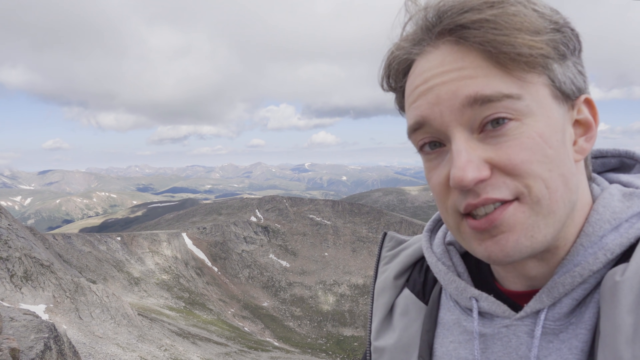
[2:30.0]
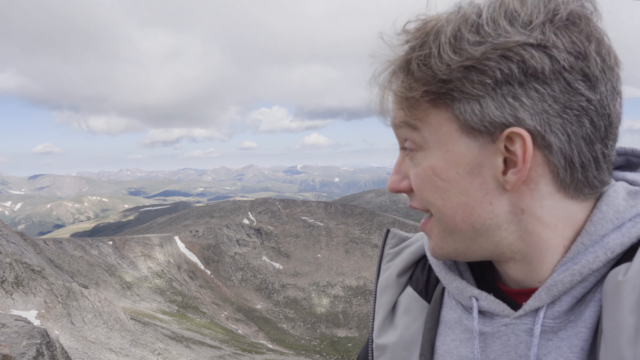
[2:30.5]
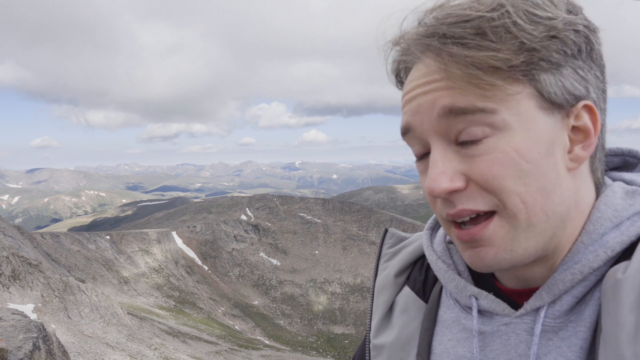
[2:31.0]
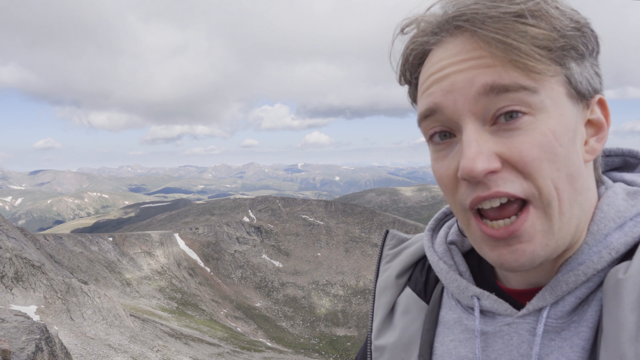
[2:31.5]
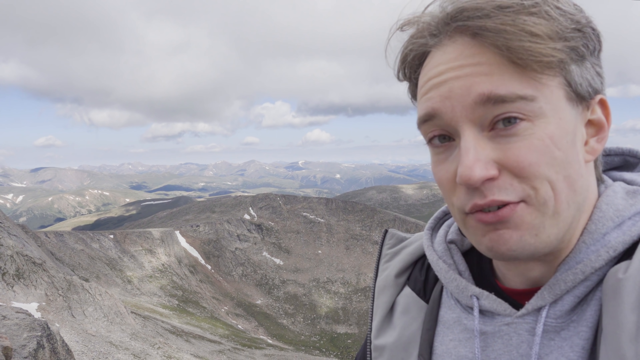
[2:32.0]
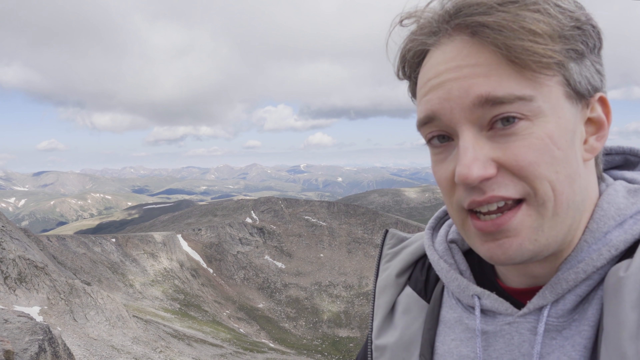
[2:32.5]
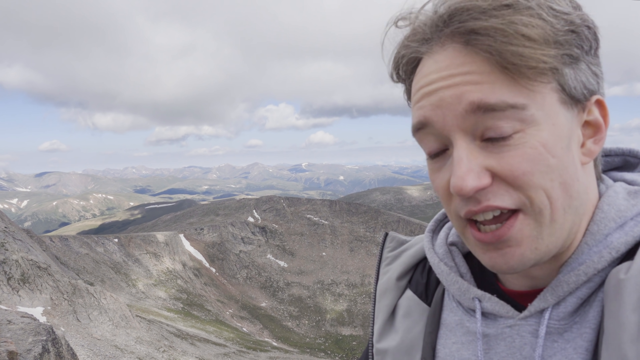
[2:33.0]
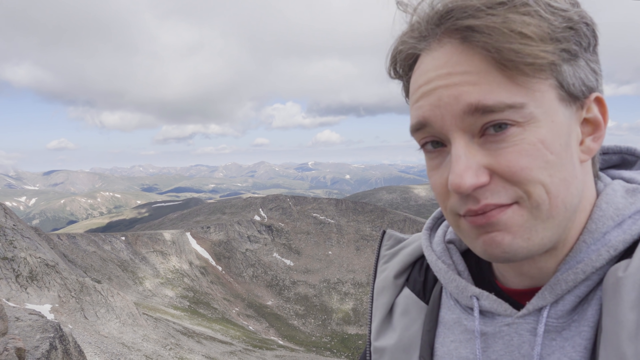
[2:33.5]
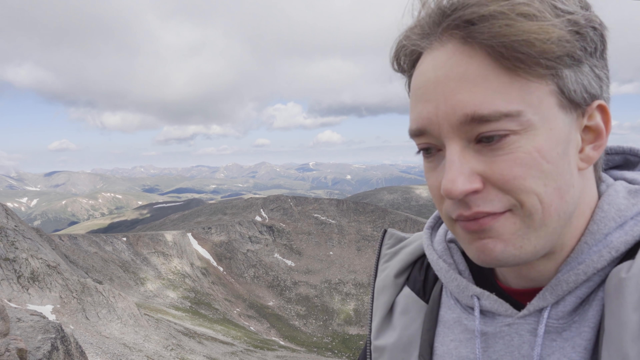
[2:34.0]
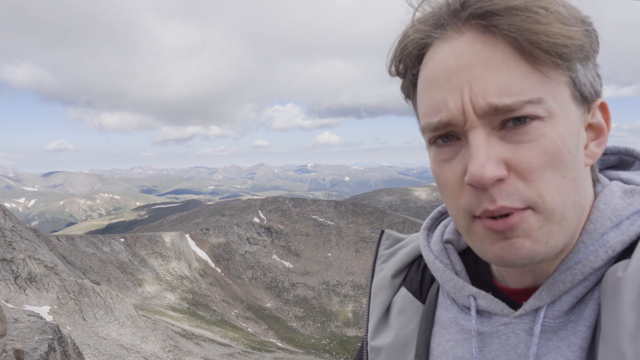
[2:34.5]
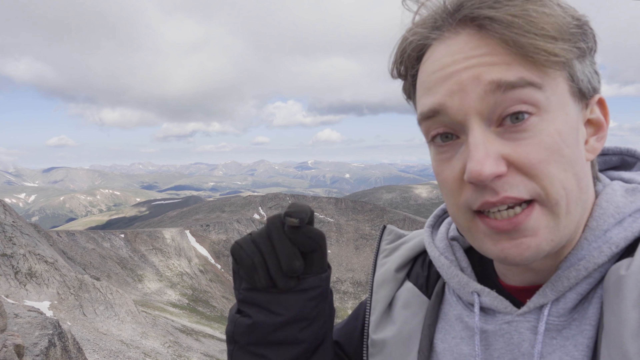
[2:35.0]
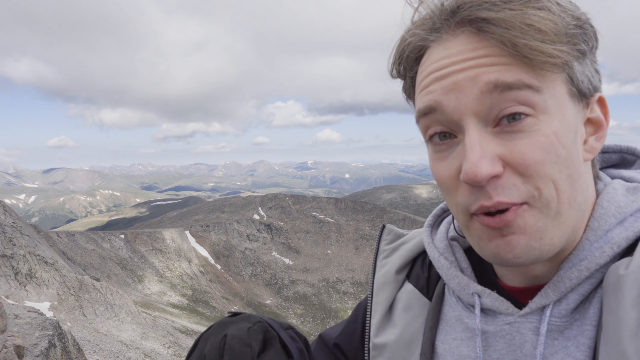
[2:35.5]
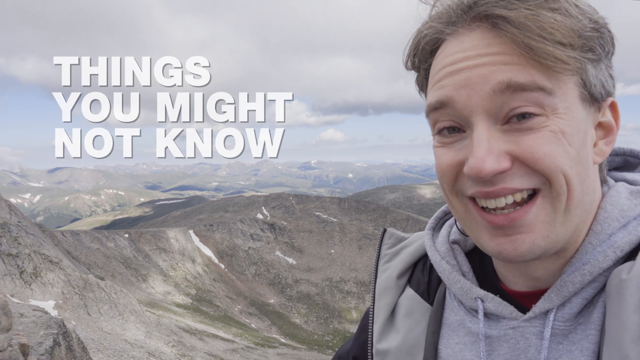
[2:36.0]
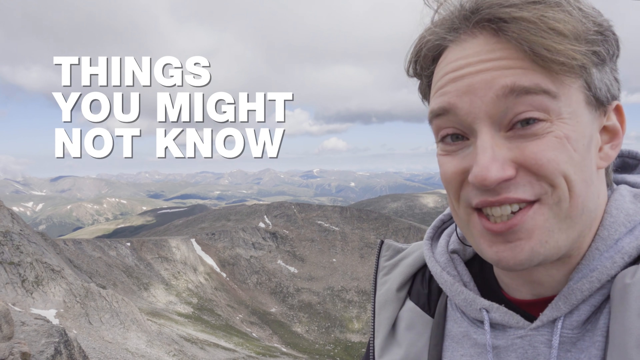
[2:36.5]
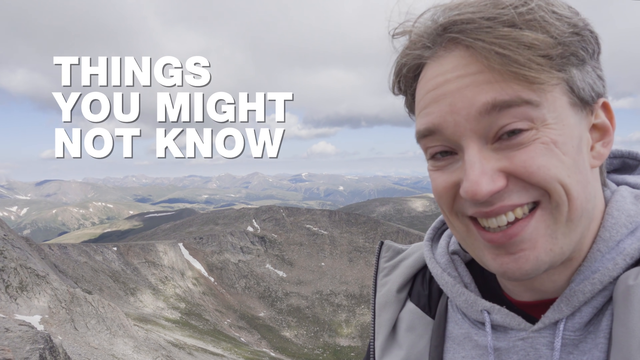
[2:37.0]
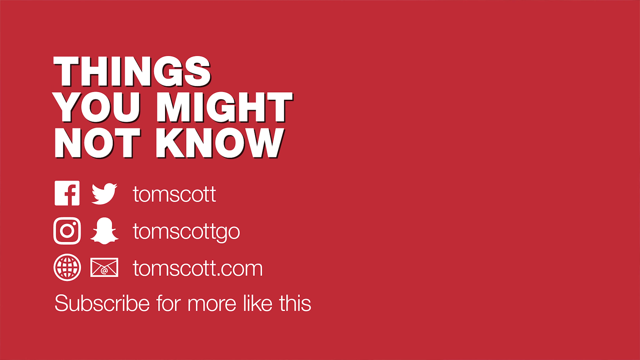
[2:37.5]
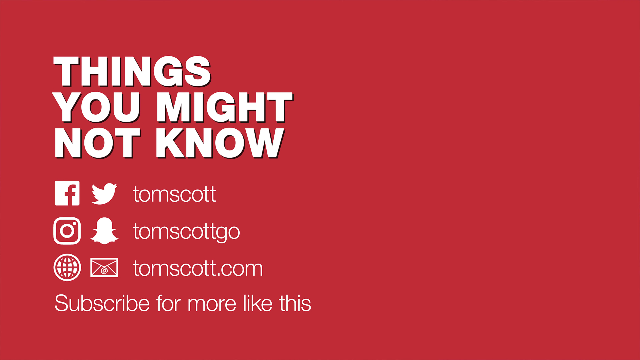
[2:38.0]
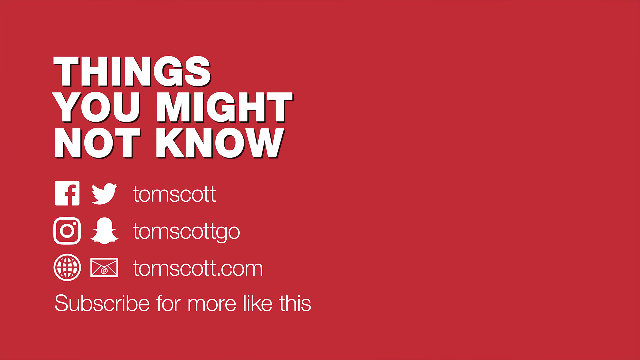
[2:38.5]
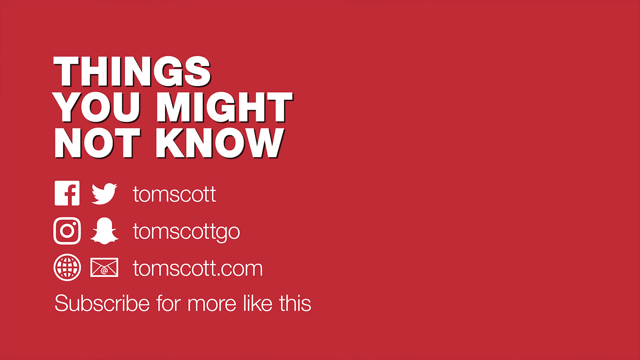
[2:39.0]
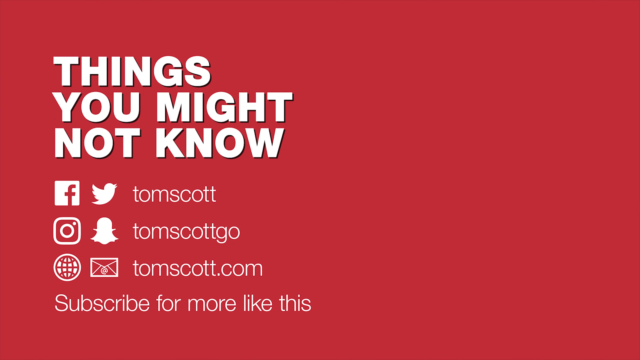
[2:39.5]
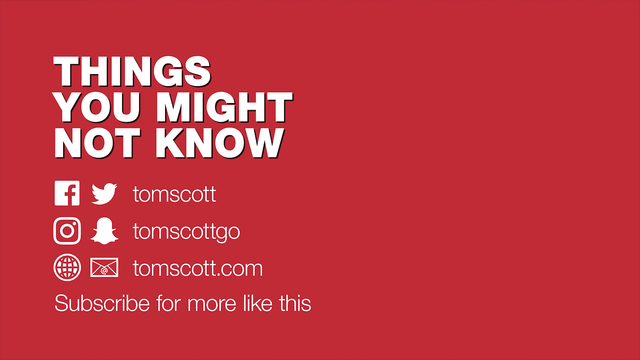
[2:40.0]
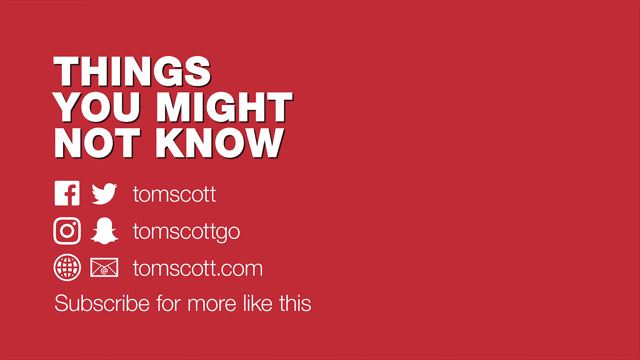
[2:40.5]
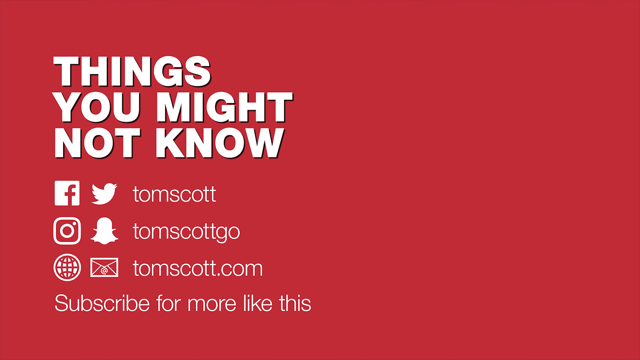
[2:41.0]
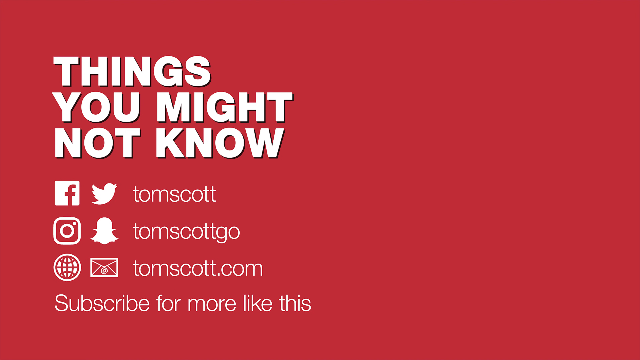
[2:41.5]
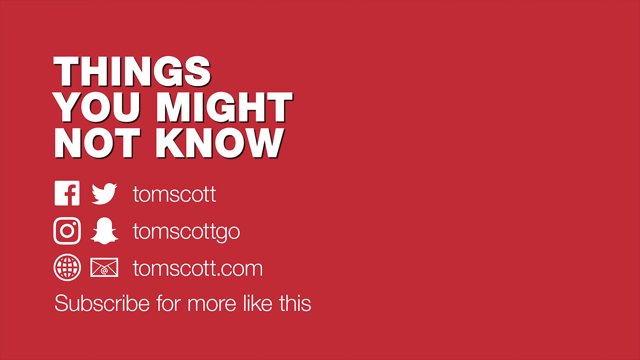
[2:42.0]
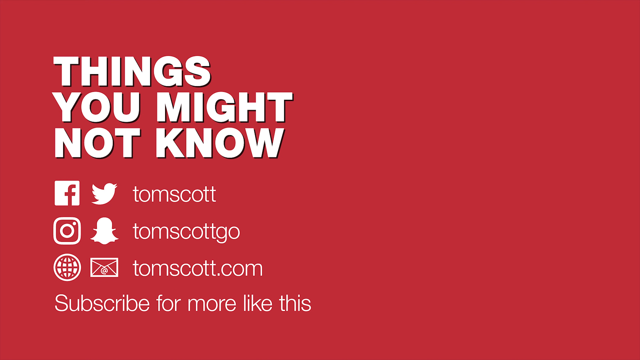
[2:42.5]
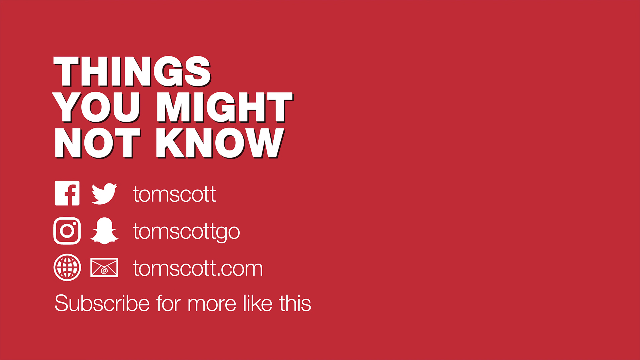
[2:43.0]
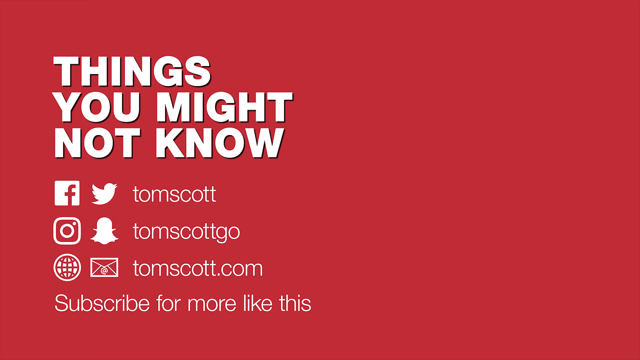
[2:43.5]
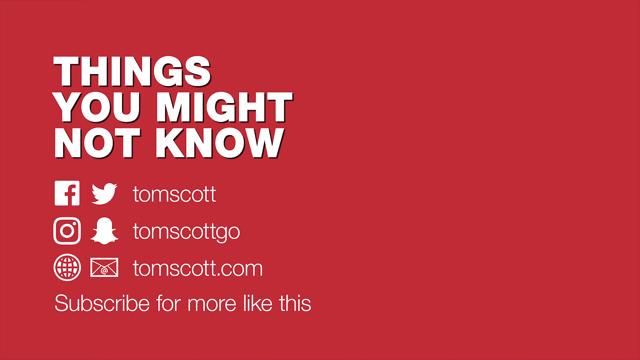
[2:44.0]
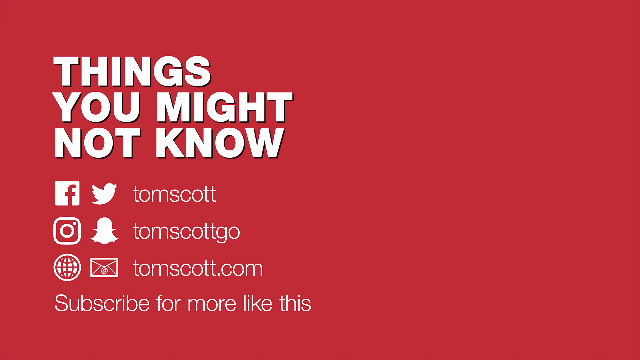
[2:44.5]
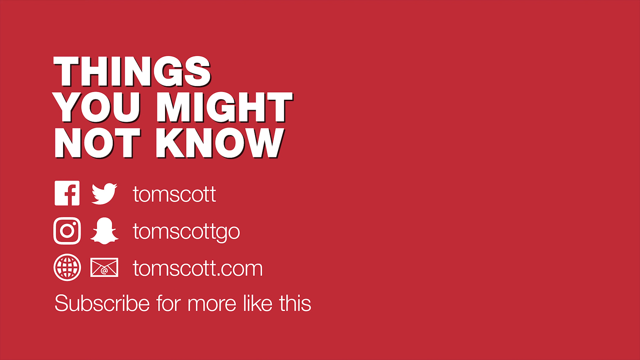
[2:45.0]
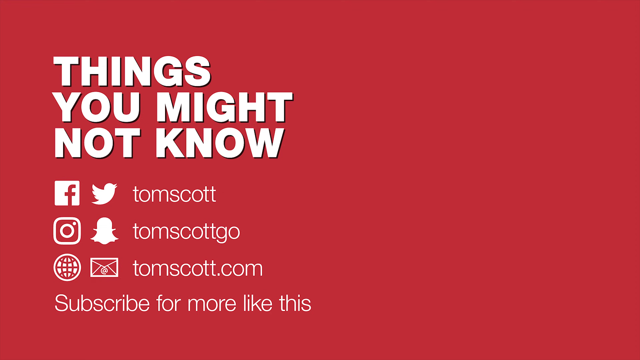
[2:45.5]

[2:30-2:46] The man speaks to the camera, explaining something. He nods, smiles at the camera, and points down with his right hand. White text in bold capital letters appears right next to his face, reading "things you might not know", and information about the man is displayed. He is happy and appears to be cold. Behind him are gray mountains that appear to have snow in small bits and pieces, under a blue sky with many white clouds.